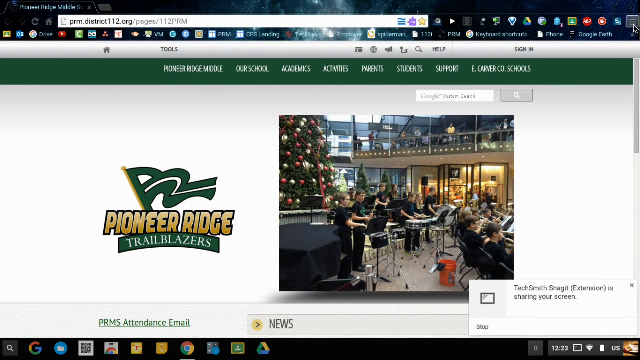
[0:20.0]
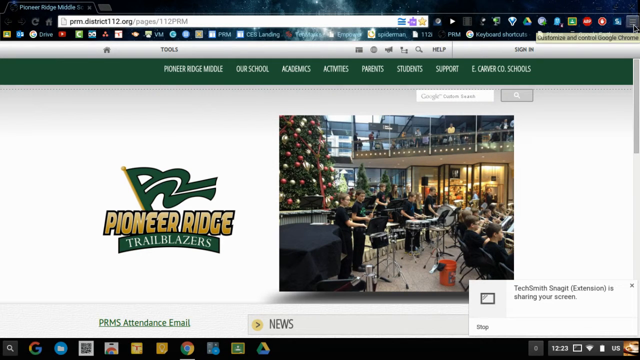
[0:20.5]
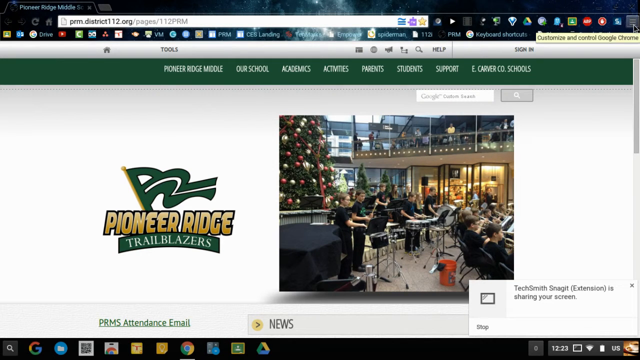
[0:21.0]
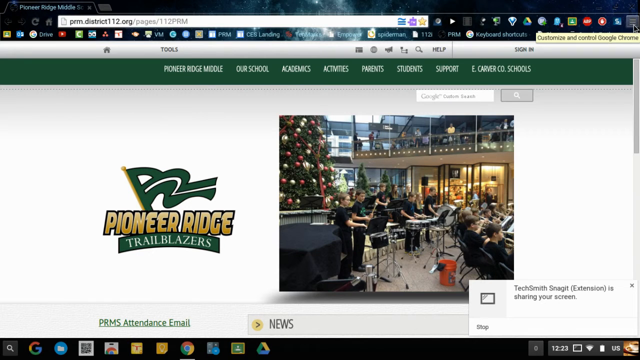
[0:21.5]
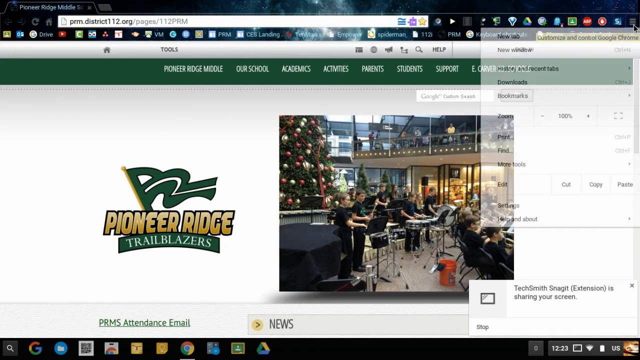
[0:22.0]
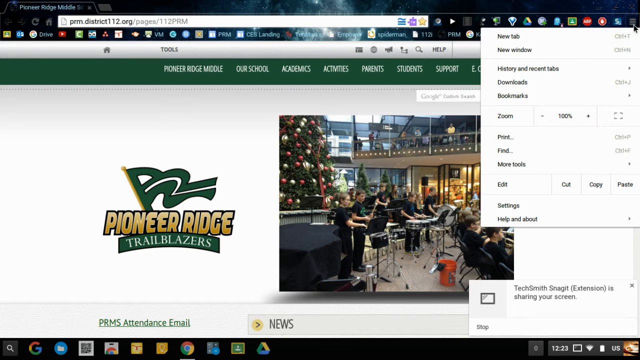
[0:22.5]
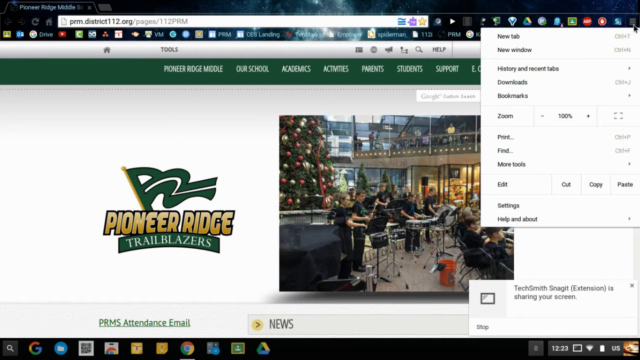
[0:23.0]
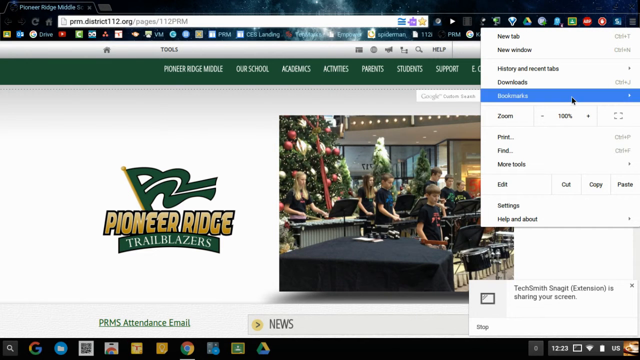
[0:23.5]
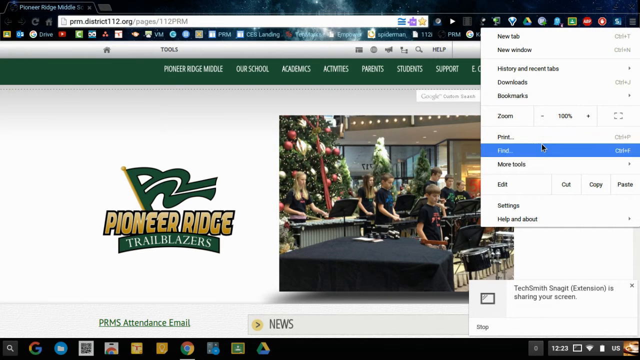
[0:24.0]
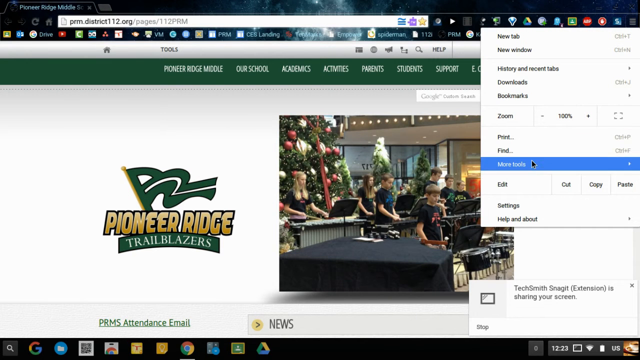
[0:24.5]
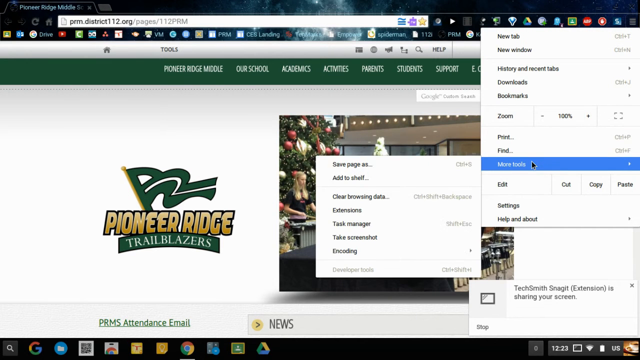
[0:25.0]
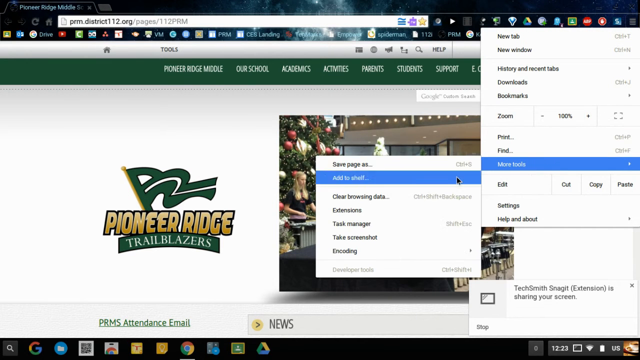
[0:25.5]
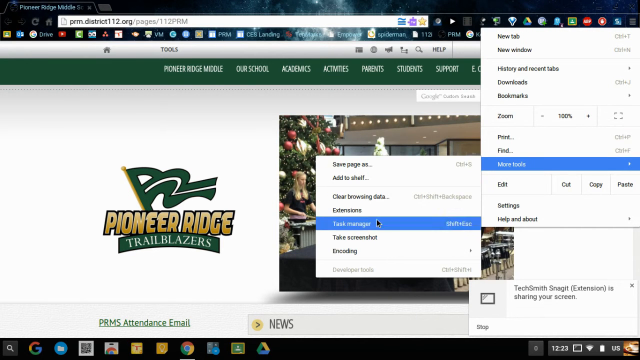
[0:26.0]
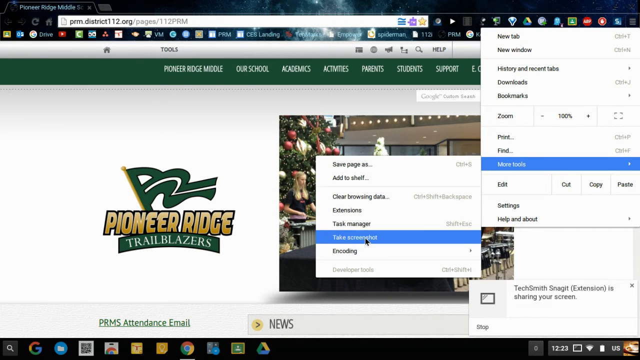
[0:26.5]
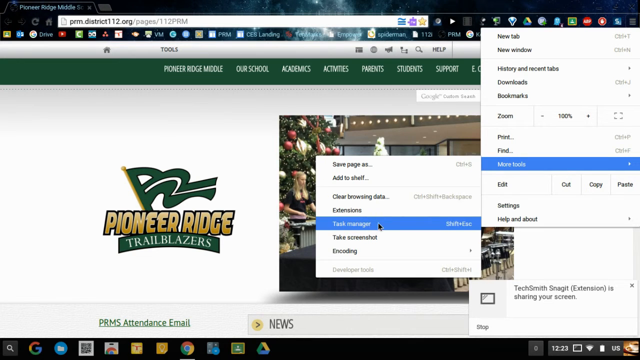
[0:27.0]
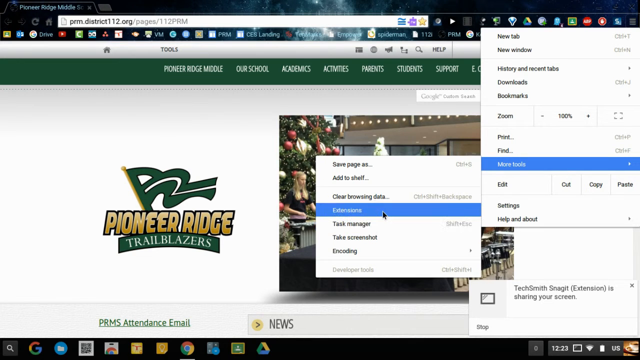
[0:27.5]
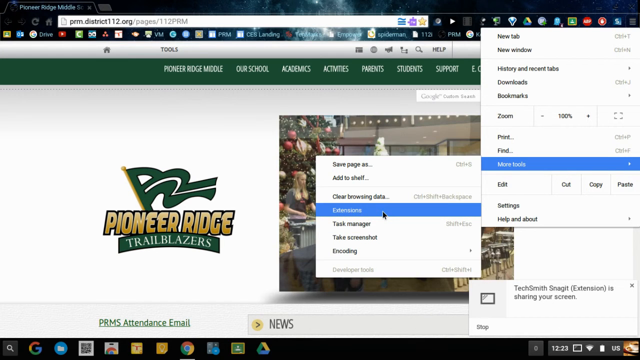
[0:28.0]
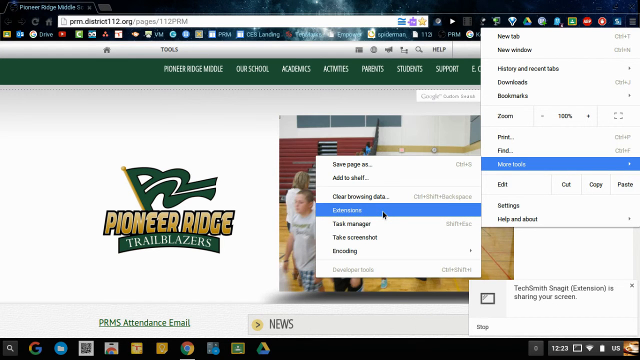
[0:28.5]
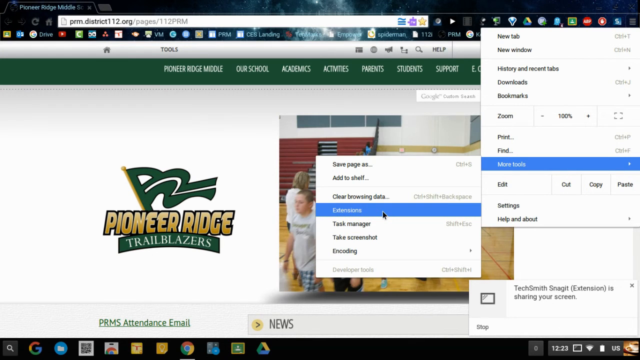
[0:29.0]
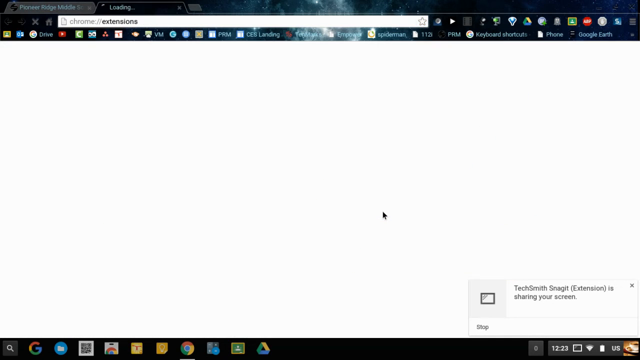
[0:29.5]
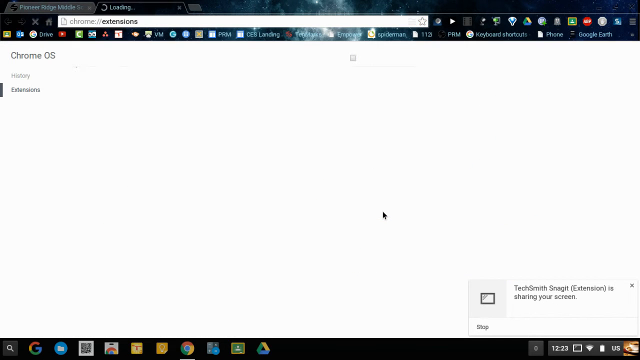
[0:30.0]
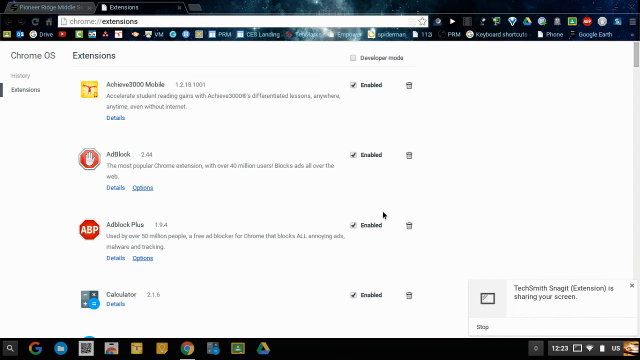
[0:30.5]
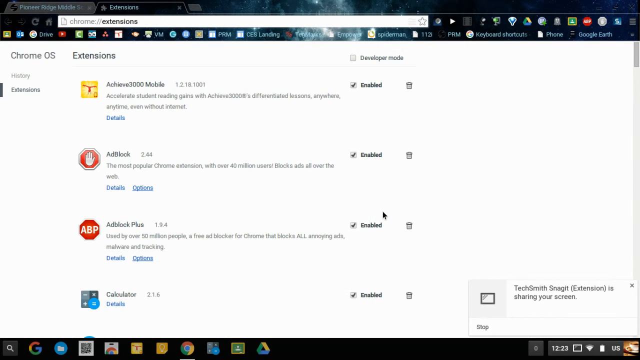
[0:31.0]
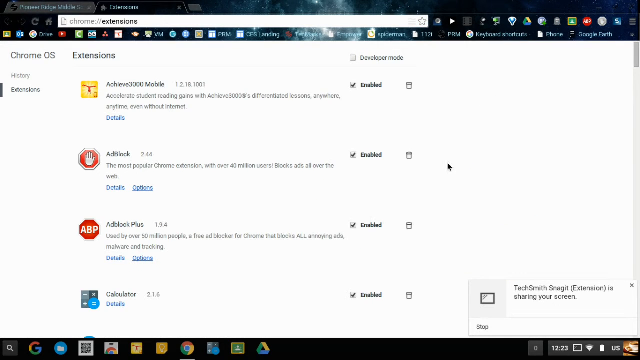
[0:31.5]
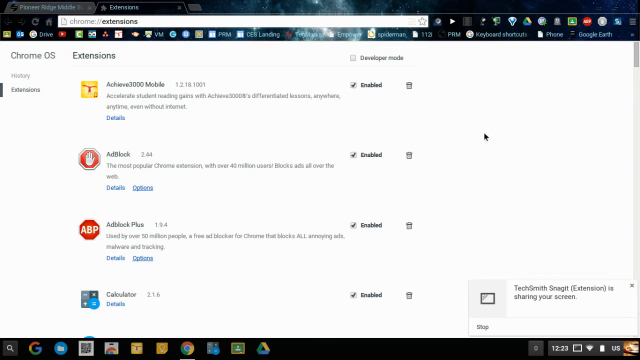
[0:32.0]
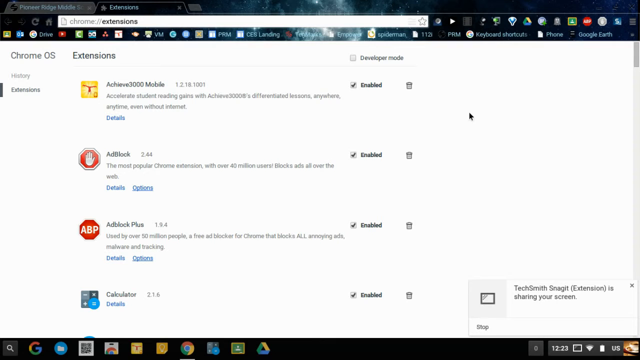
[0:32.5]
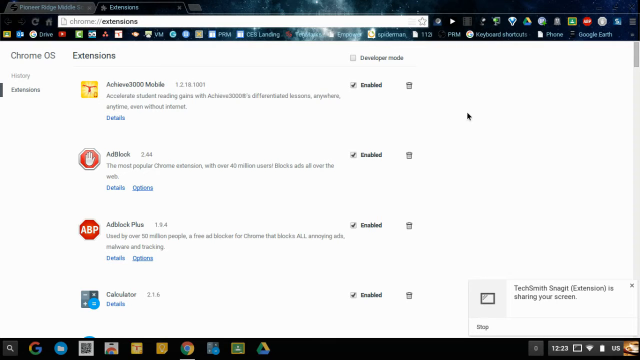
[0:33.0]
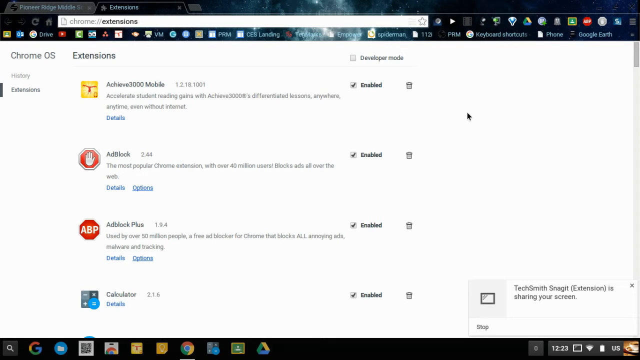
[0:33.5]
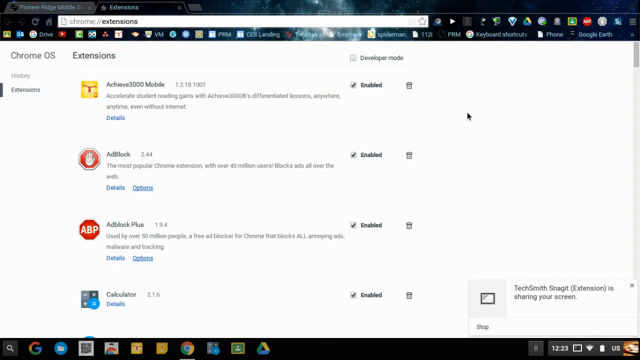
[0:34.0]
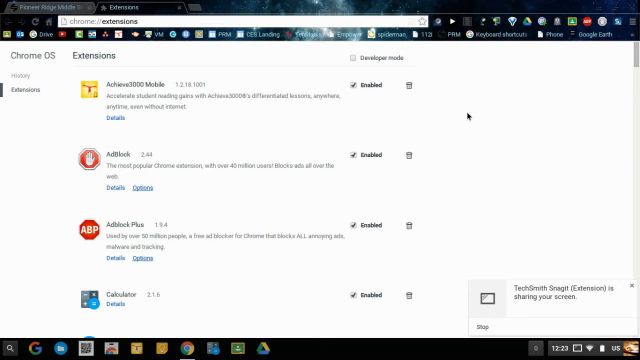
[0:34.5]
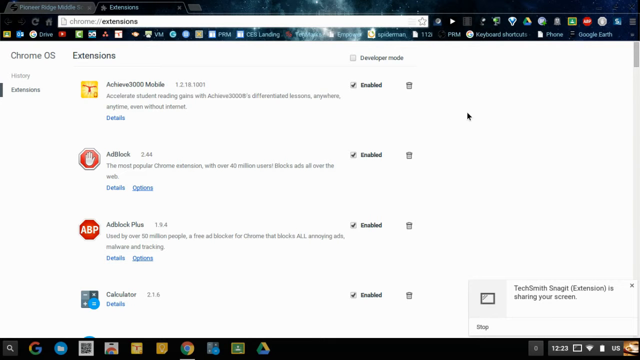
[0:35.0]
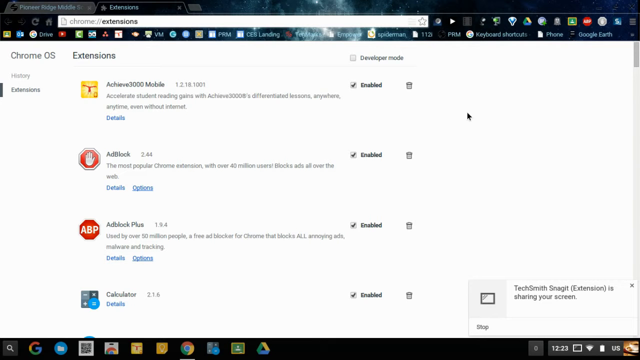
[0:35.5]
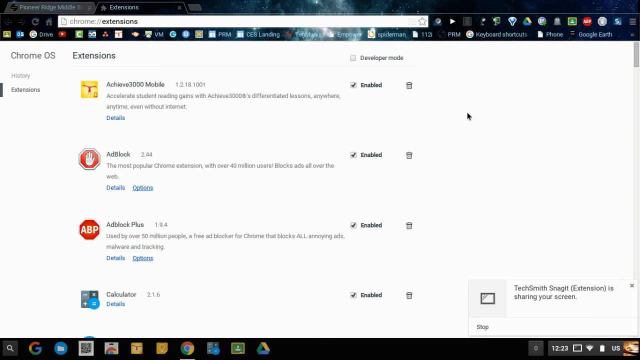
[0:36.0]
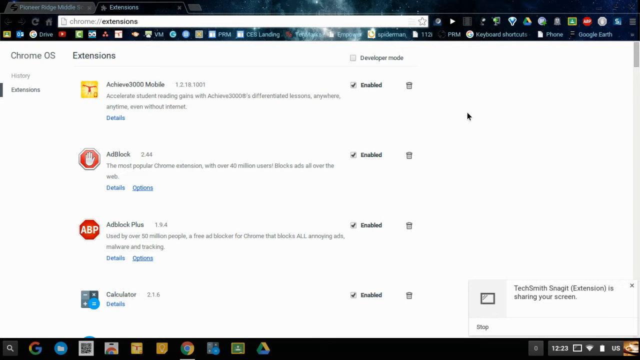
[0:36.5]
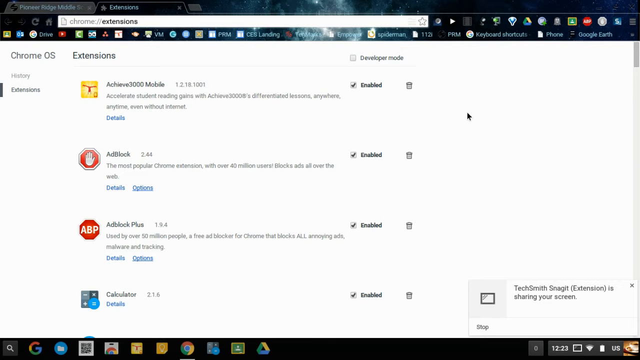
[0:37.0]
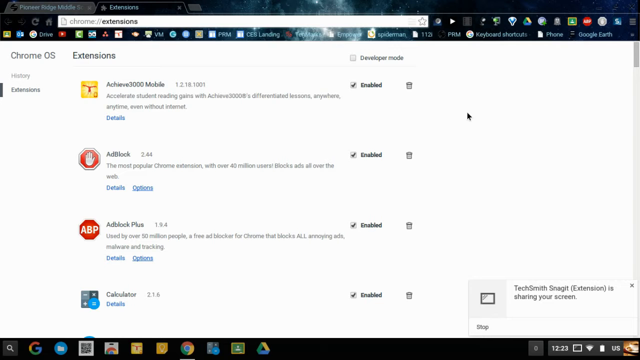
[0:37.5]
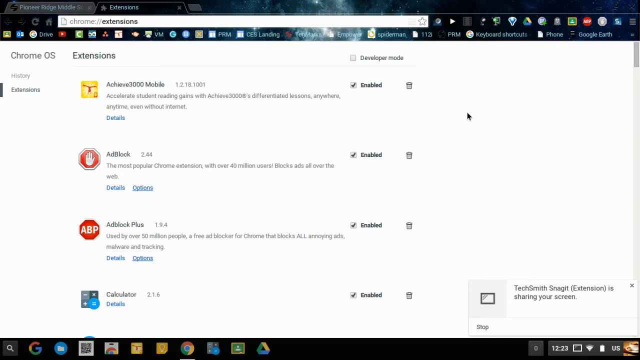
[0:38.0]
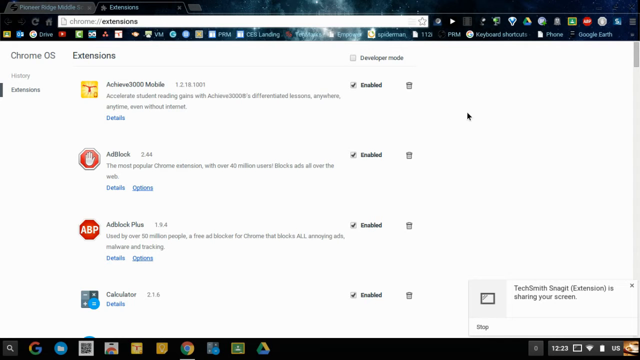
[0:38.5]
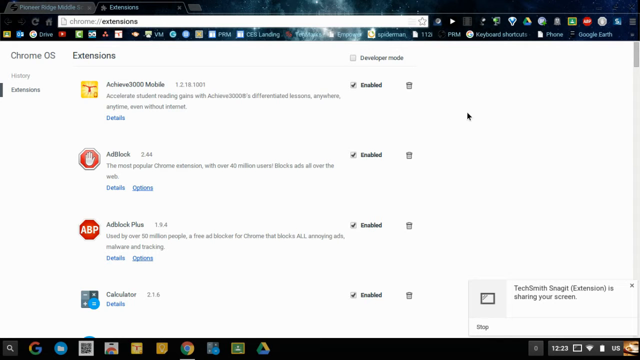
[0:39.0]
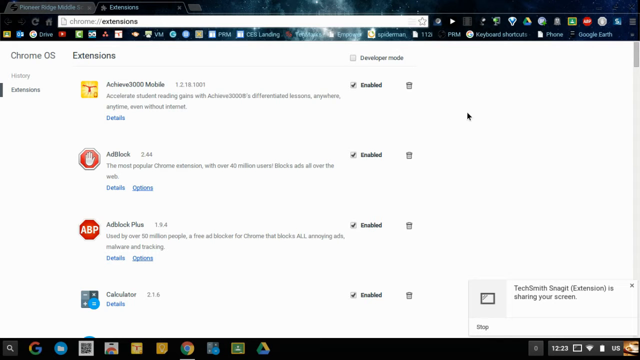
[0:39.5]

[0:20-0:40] Someone pulls down one of the pull-down menus from the top of the browser, going to customize, then more tools, then extensions. Meanwhile, the pictures in the background keep changing: from the band with the large Christmas tree behind it to a different shot of the band, also with the Christmas tree but with less of it showing, where some individuals can be seen more distinctly. The chairs they sit in are black. Next comes a picture of what are apparently girls in gym clothes, with plaid skorts and white t-shirts or something similar. Most of the screen is dominated by the pull-down going to the extensions page, which shows Achieve 3000 Mobile, Adblock, Adblock Plus, and Calculator. All four are enabled, and the page shows Chrome OS is being used.